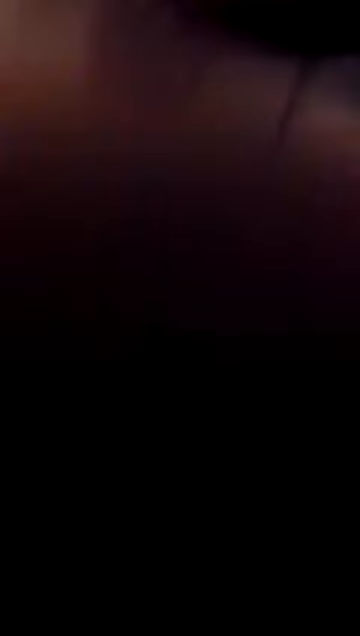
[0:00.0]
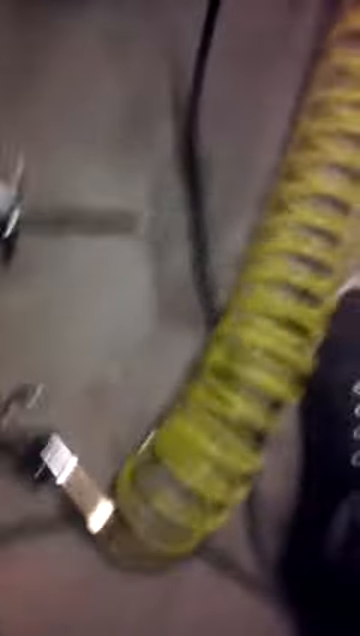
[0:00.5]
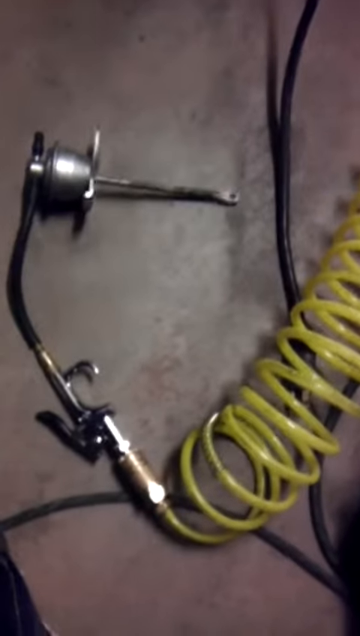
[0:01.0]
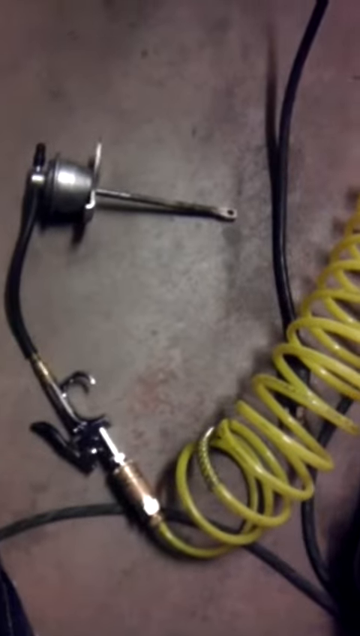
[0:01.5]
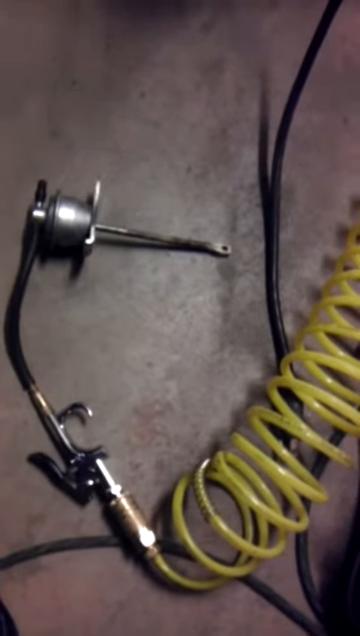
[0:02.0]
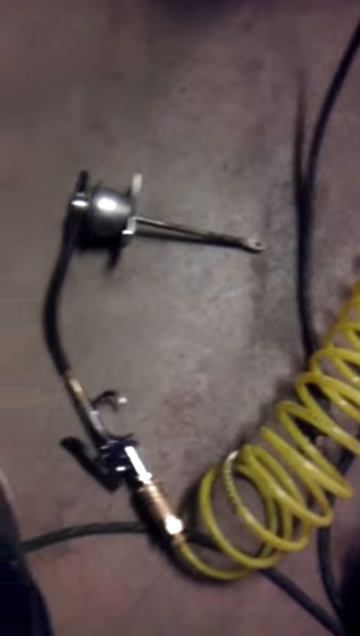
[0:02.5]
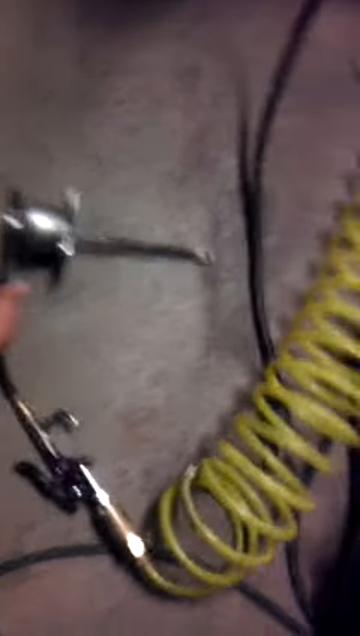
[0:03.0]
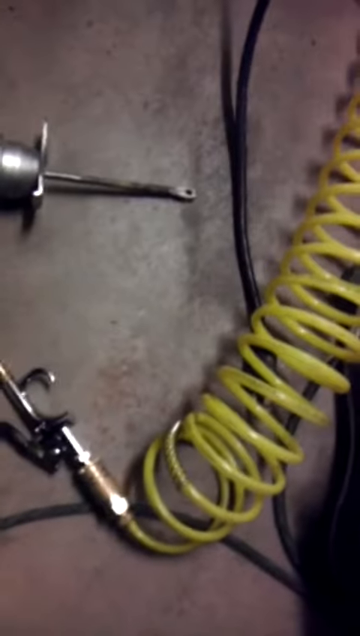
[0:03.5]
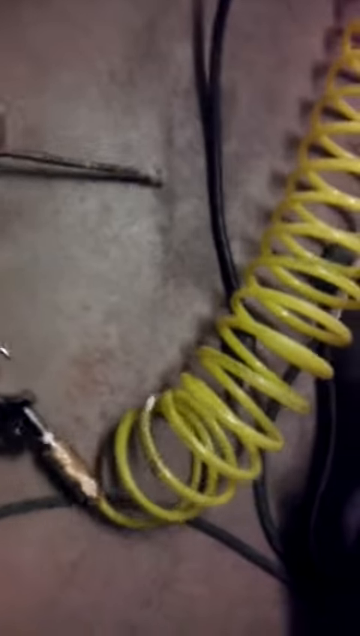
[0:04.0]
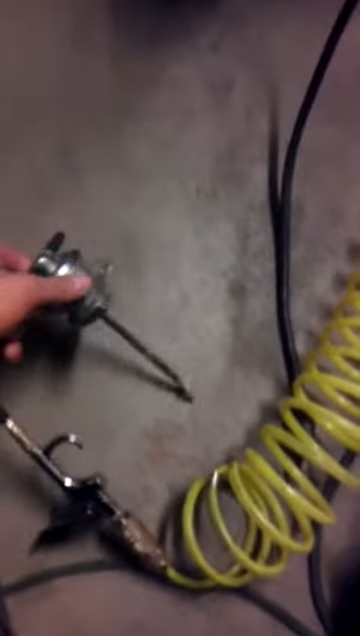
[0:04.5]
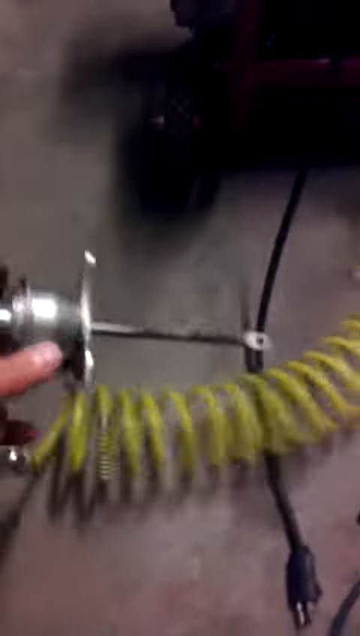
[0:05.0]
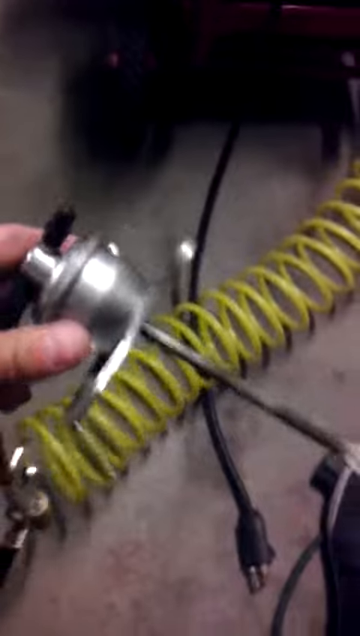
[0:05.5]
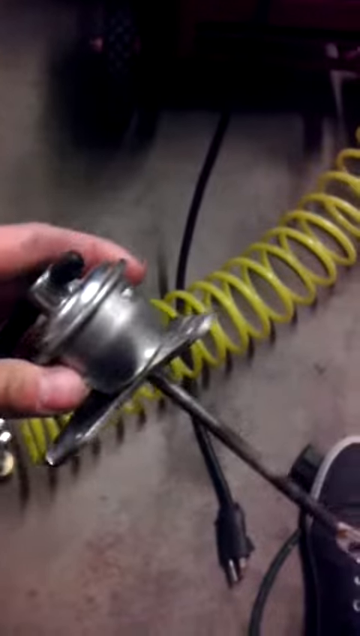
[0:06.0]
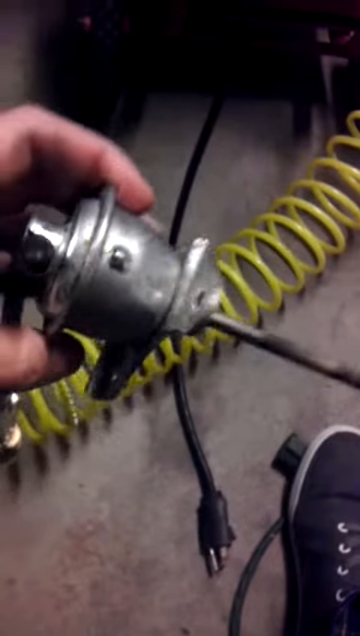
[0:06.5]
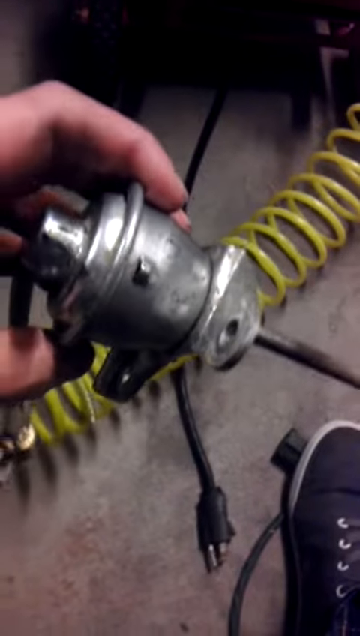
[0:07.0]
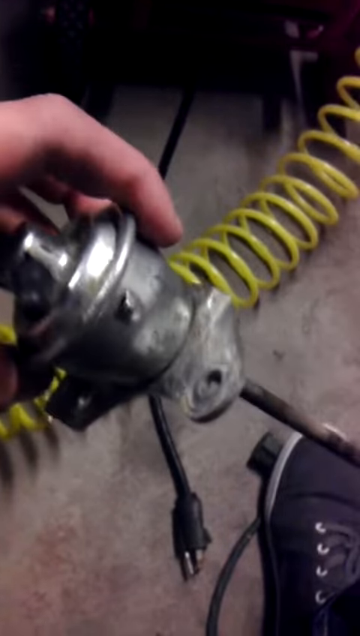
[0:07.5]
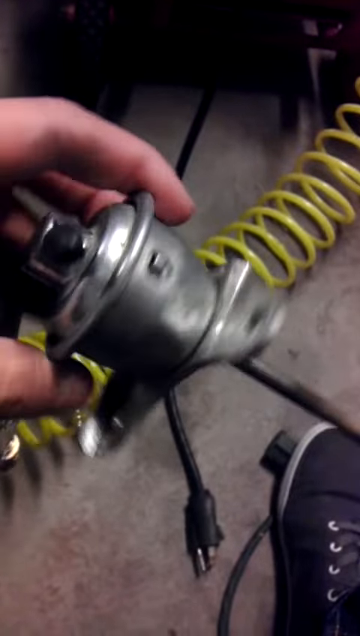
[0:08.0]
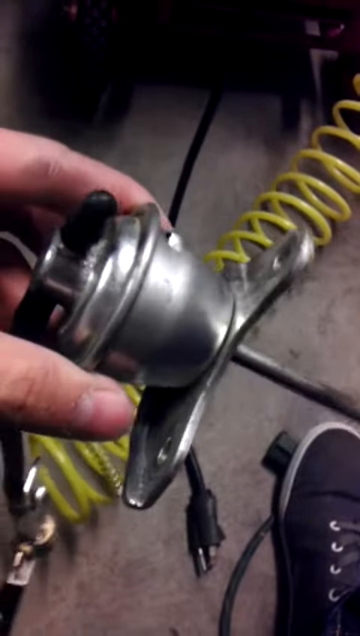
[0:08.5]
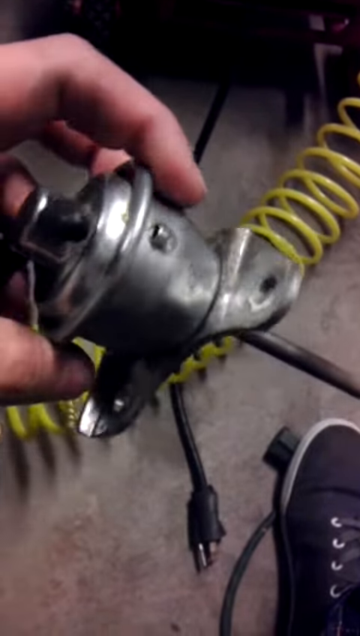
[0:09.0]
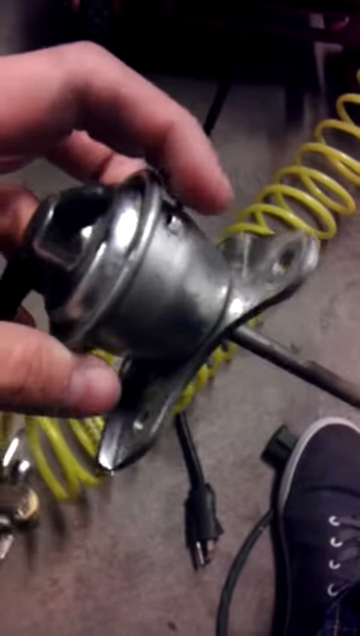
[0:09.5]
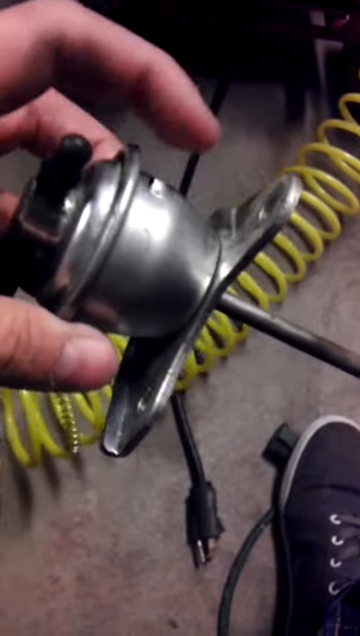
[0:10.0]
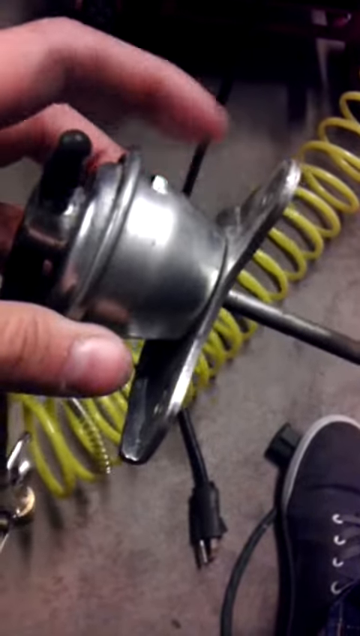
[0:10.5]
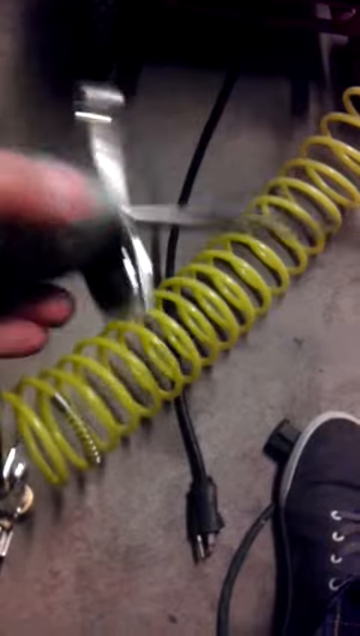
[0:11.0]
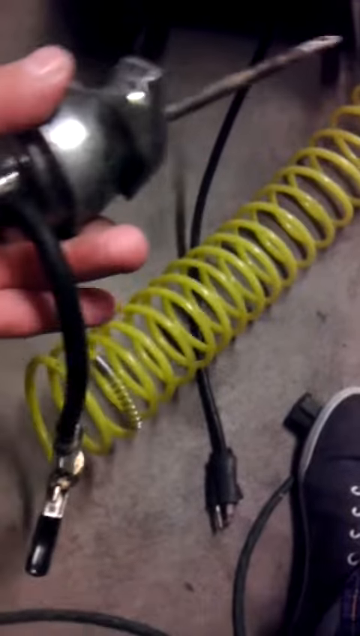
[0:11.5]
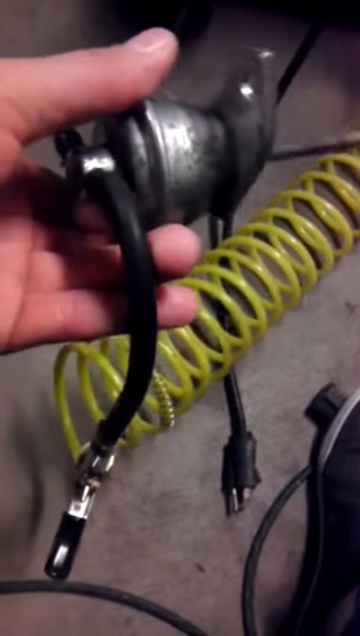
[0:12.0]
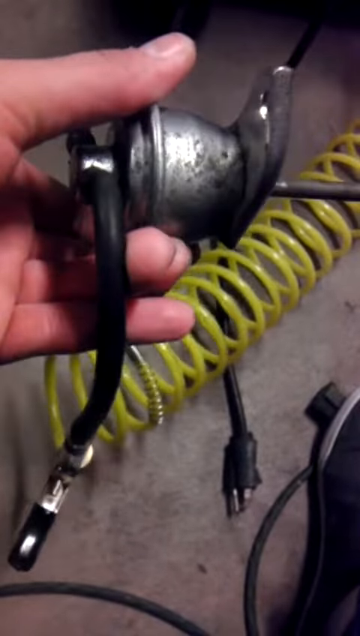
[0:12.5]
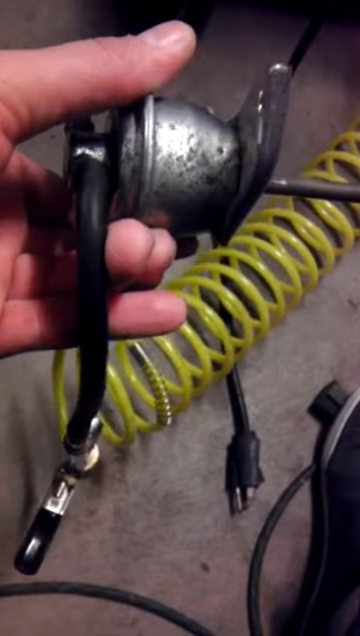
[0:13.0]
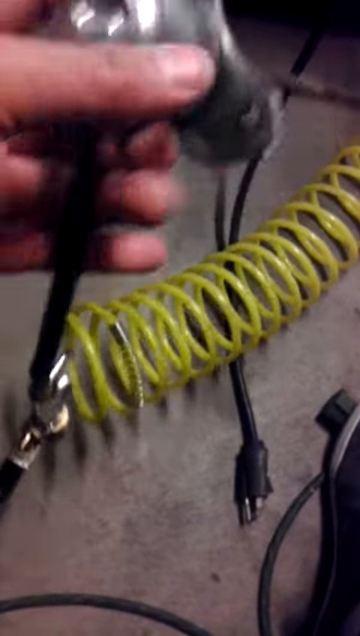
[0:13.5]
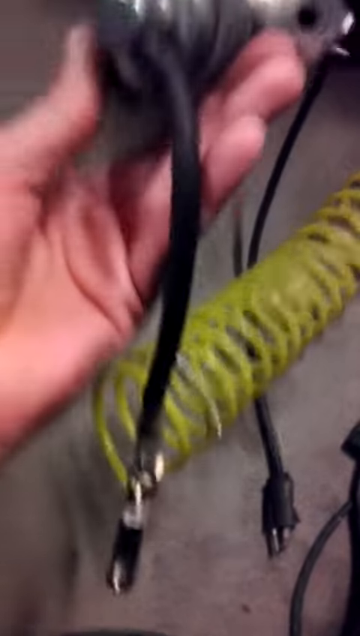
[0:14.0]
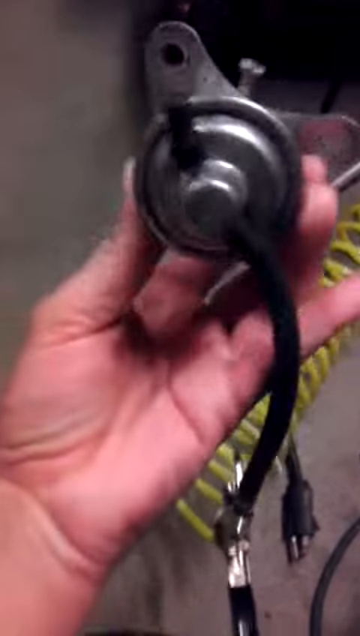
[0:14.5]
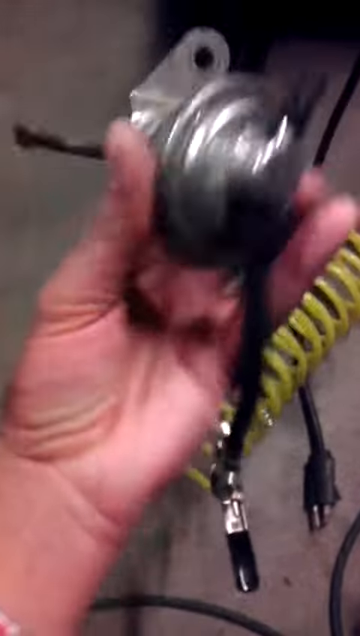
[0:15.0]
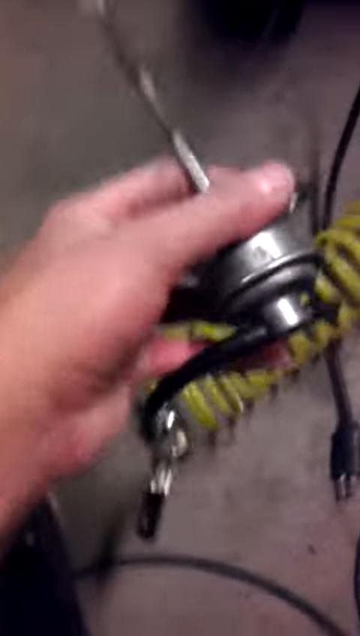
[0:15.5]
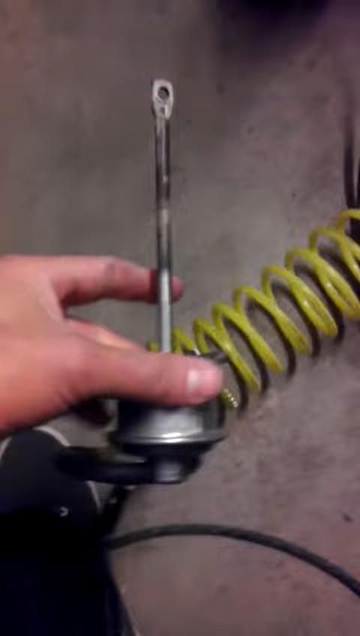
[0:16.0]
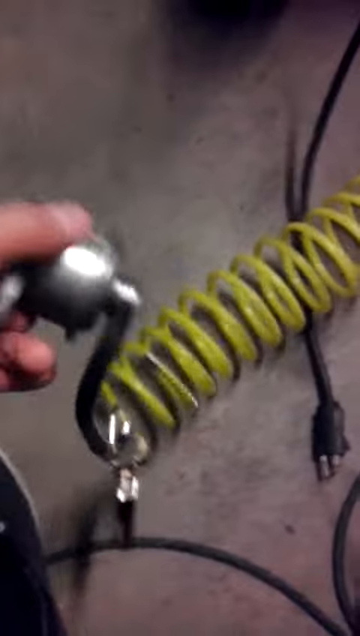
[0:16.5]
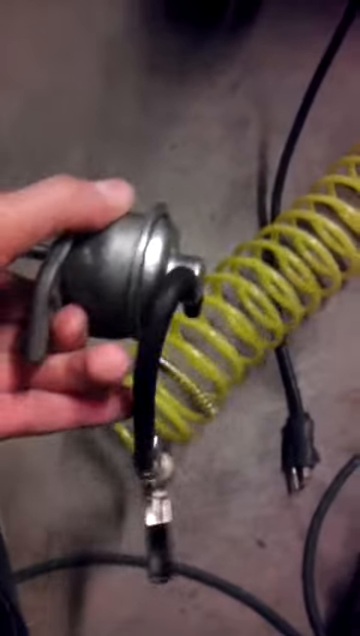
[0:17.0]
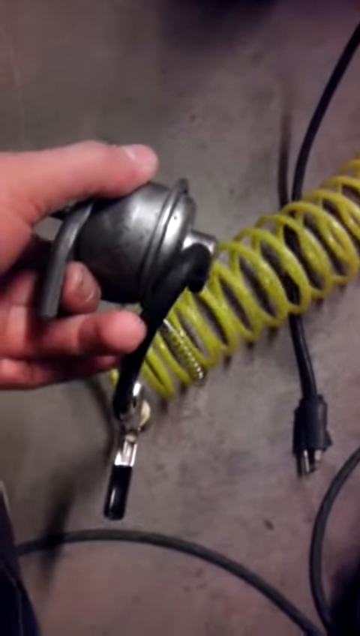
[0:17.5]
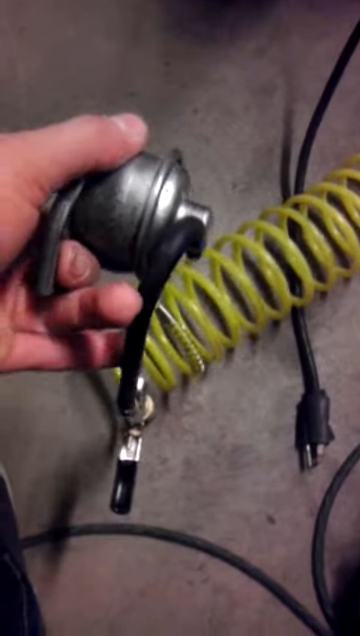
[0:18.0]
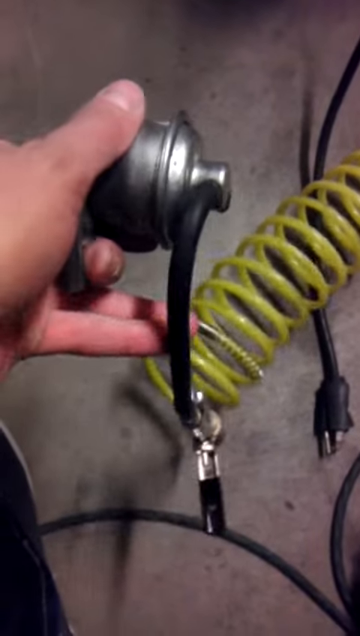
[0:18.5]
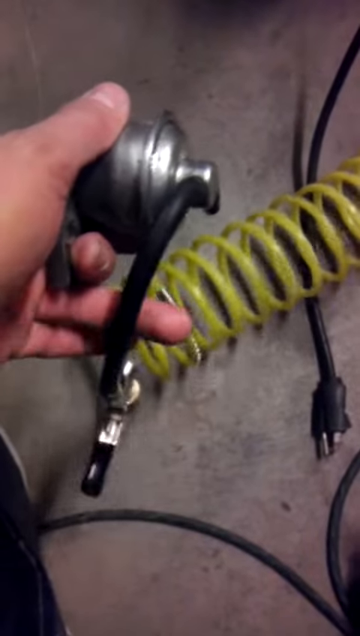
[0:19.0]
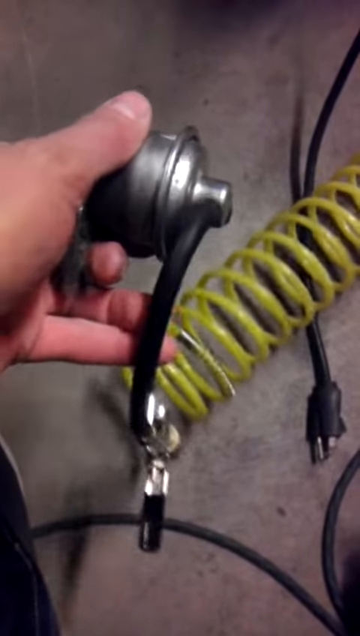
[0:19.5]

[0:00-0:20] A very low-quality video shows a coil-looking yellow cable and a man picking up some sort of unidentified metal piece connected to the yellow coiled cable. The ground seems to be pavement. Two black shoes worn by the man holding the metal piece are briefly visible. A power cord is also briefly in the frame. The footage is very shaky and very zoomed in, so what the yellow coiled cable is connected to cannot be seen. The metal piece he shows at the end almost looks like it has a screwdriver head on it, though this is uncertain.